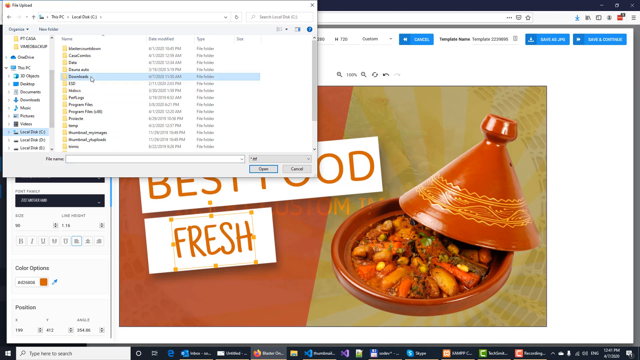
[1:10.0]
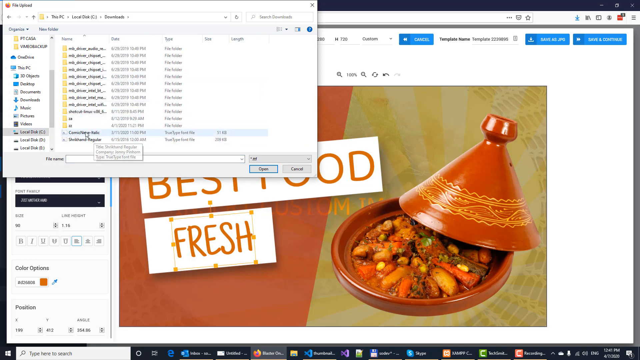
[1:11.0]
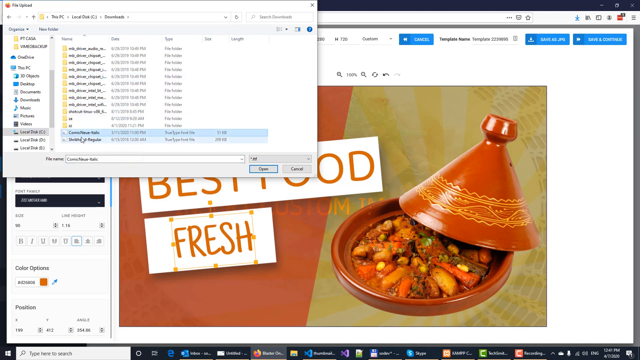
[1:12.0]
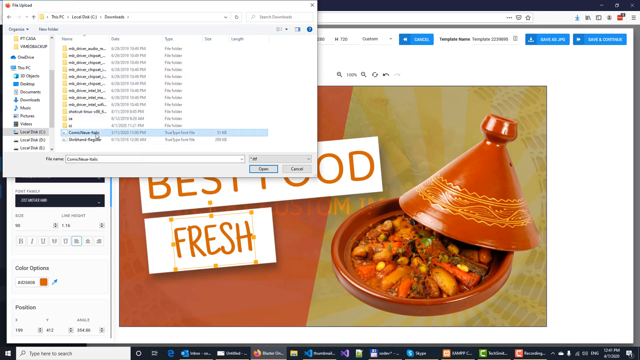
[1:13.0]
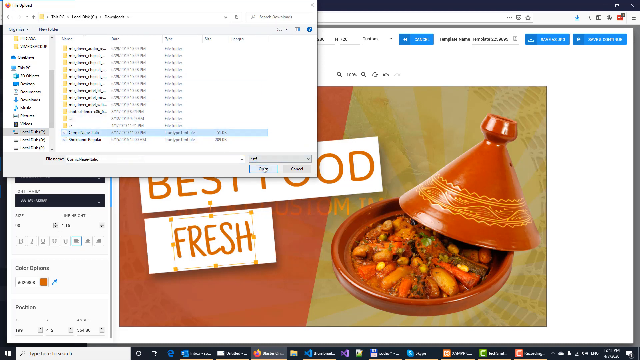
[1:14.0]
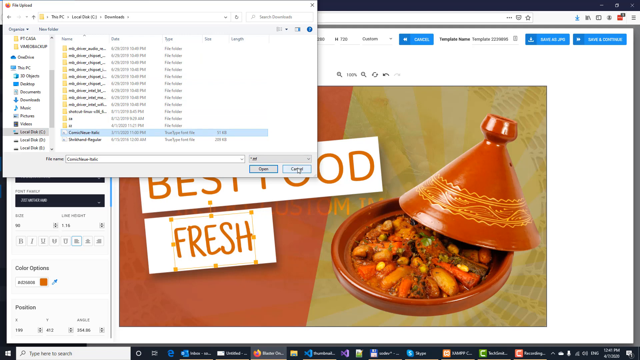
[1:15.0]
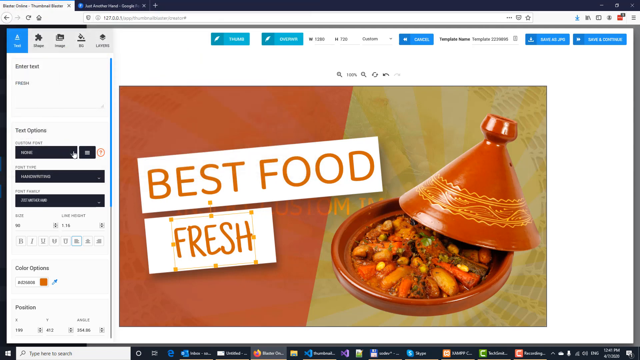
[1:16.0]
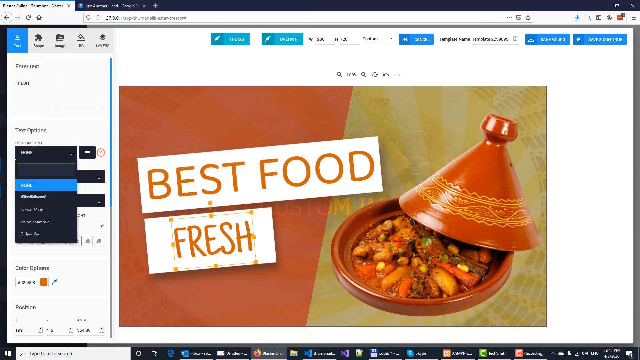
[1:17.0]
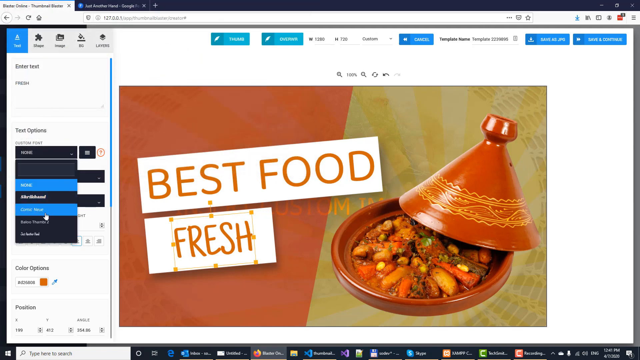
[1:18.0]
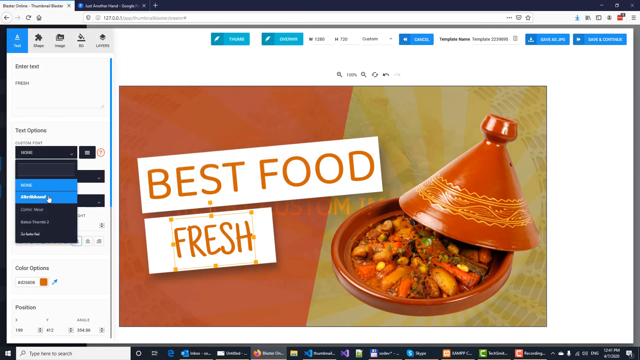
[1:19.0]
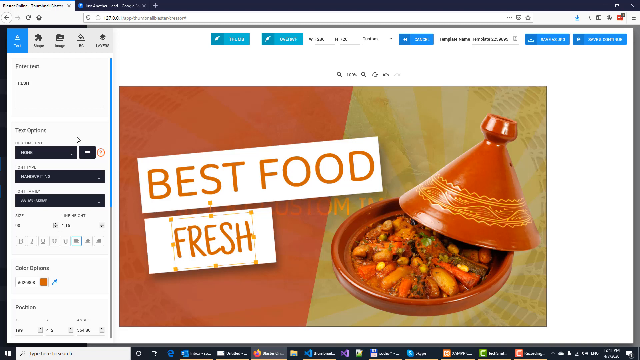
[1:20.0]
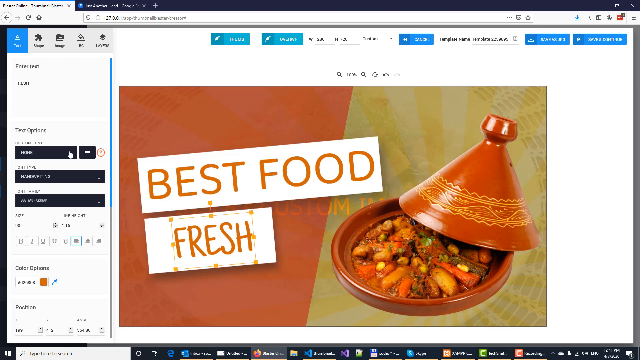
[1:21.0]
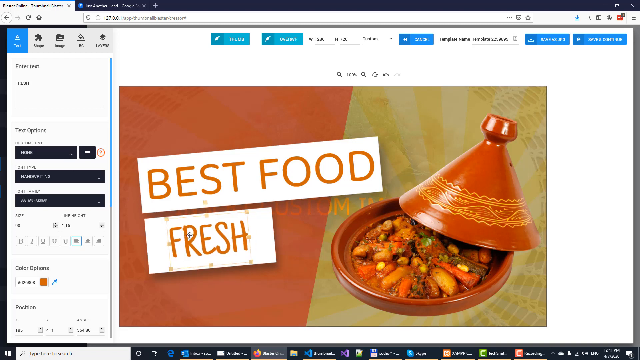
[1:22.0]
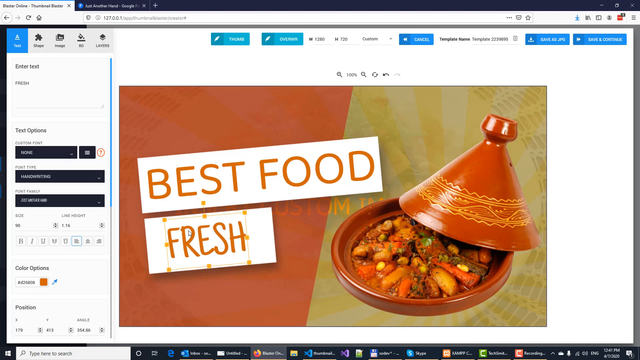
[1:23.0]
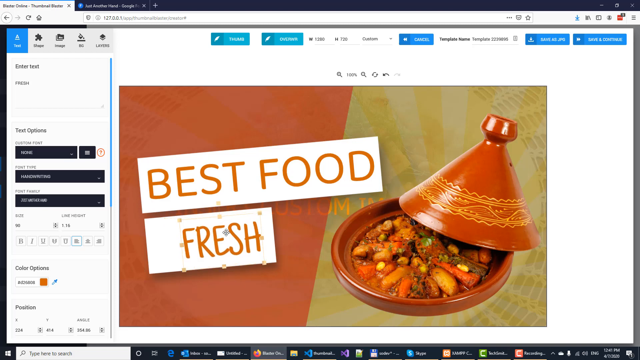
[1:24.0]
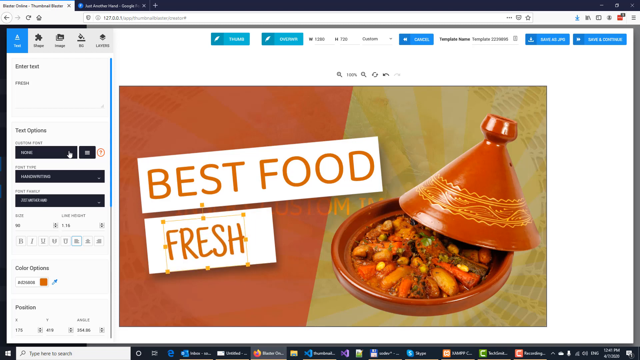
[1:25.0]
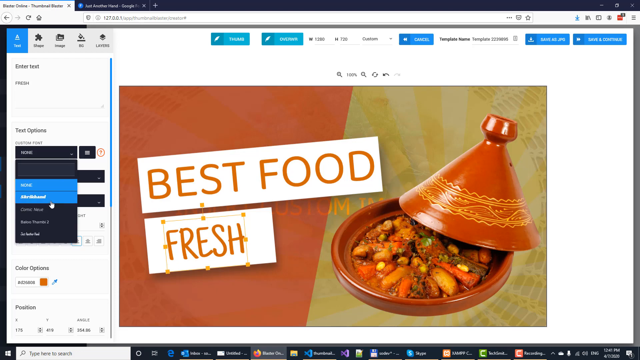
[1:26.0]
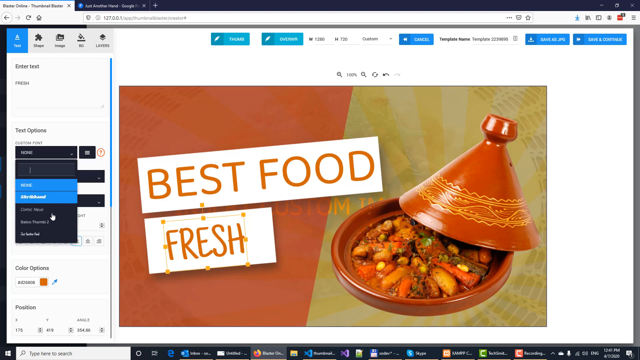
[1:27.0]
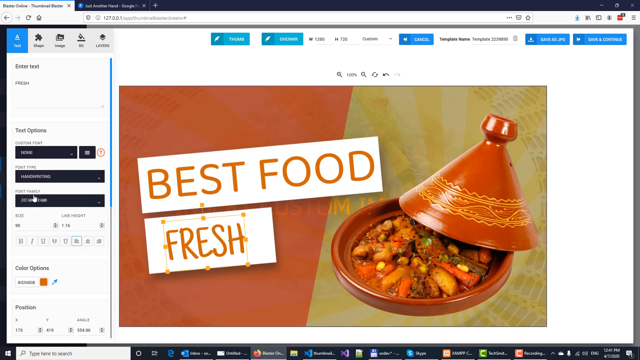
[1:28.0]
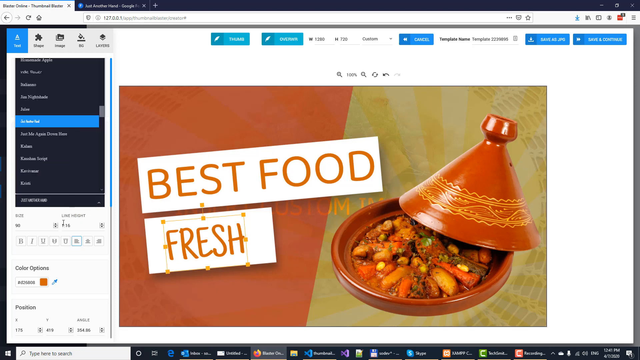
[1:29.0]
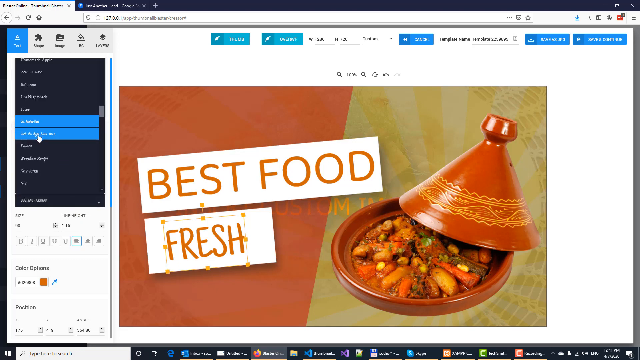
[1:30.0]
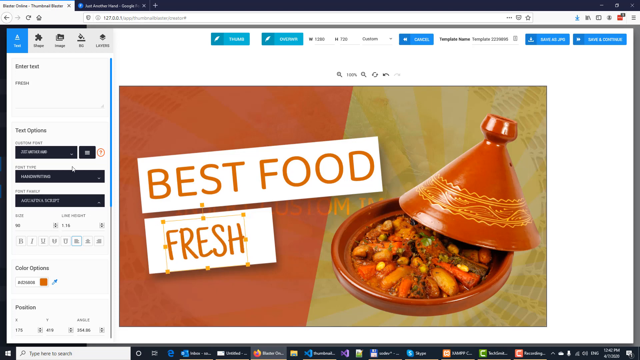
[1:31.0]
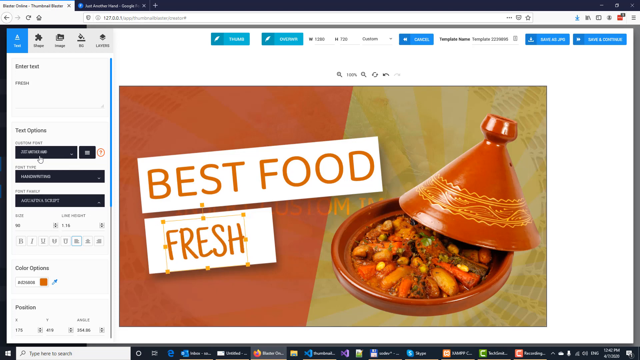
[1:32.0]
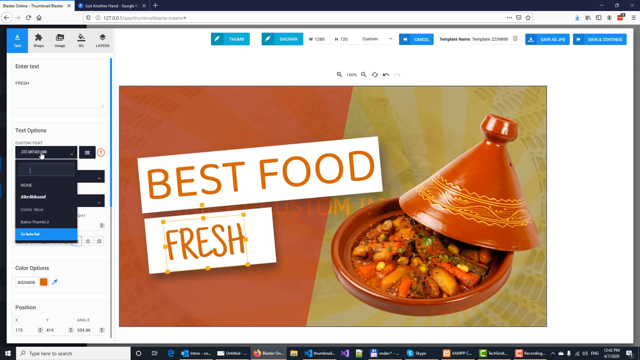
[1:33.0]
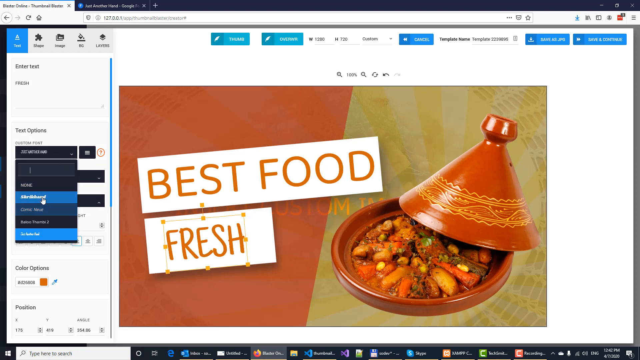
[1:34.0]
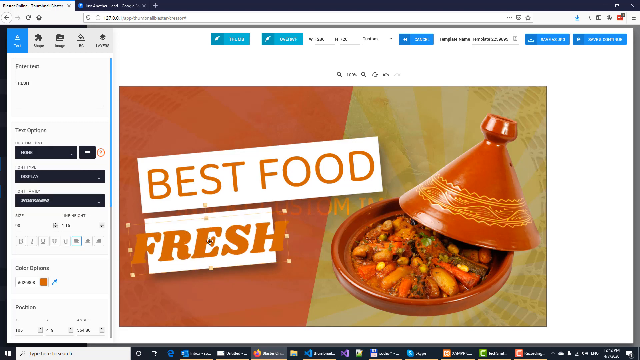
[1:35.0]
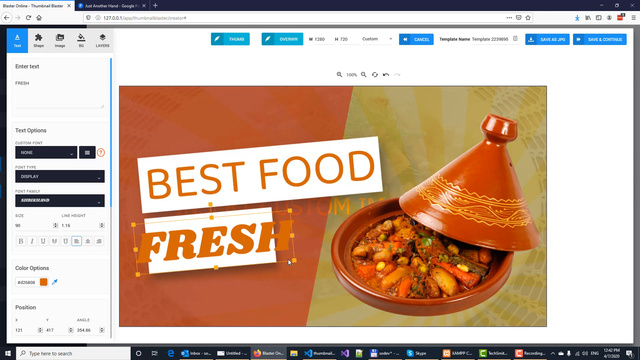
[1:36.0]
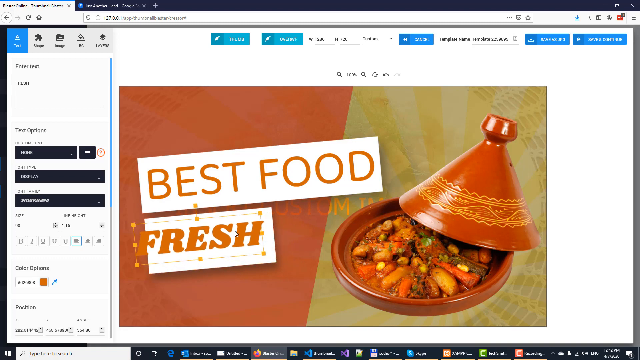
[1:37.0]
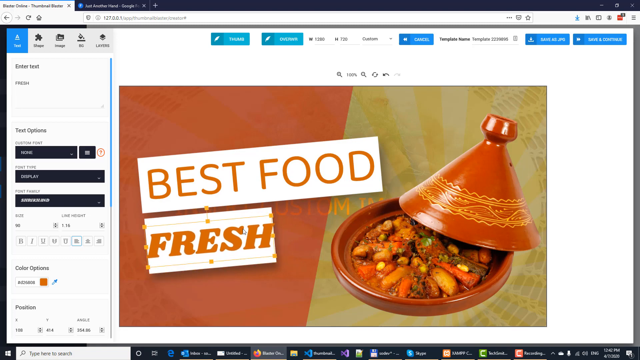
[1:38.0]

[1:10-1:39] The user goes through files on the computer and appears to click something; the whole screen is shown from afar, so it is somewhat hard to tell exactly what is clicked. On the left side of the web page, which shows custom font and text options, the user clicks the drop-down menu and selects custom font, then moves and adjusts the word "fresh" on the advertisement in the middle of the screen. The user returns to the left side to click through the font type and custom font drop-down menus, finally selects a different font for "fresh", and adjusts it to fit the advertisement, which reads "best food fresh" and shows a dish of vegetables inside an orange bowl. The video then ends.